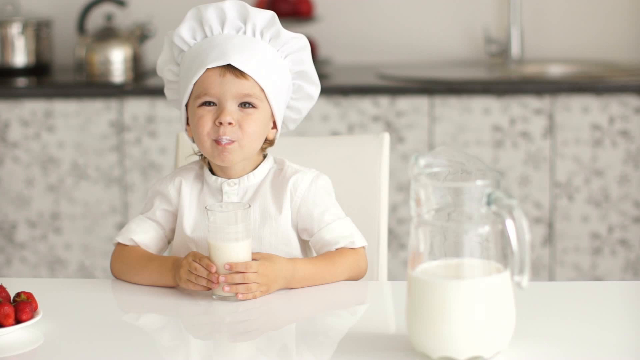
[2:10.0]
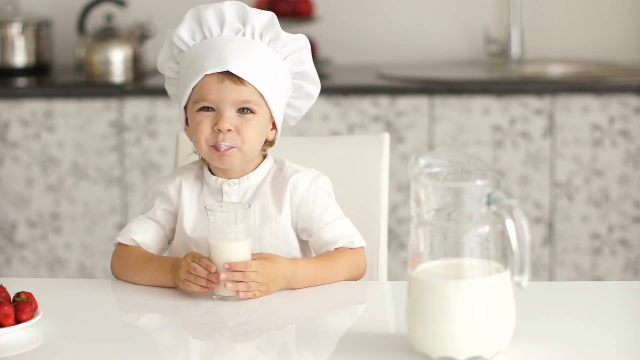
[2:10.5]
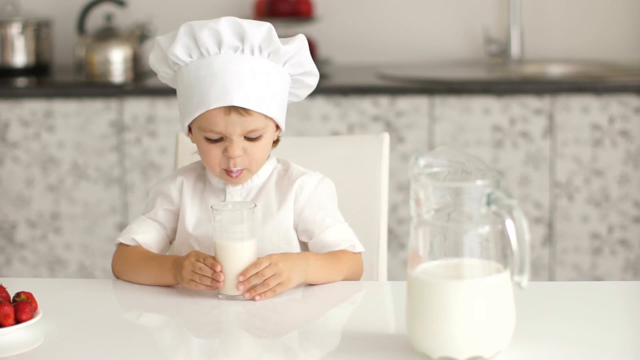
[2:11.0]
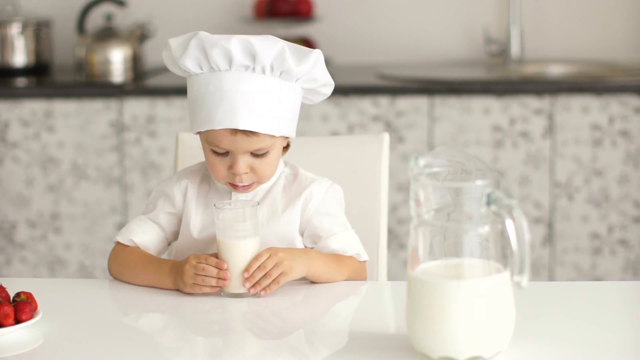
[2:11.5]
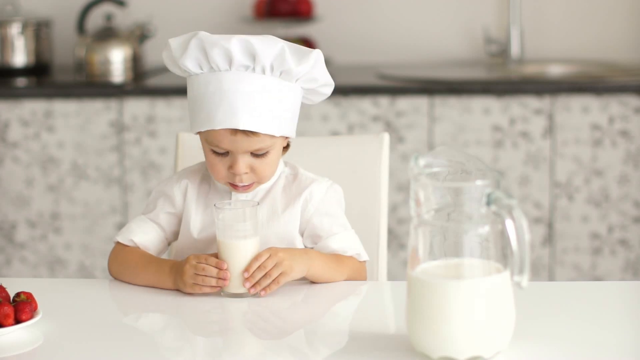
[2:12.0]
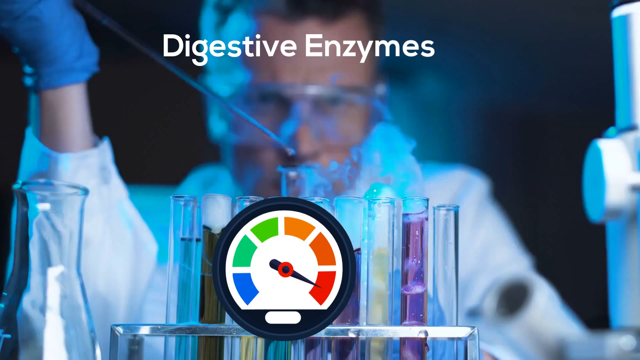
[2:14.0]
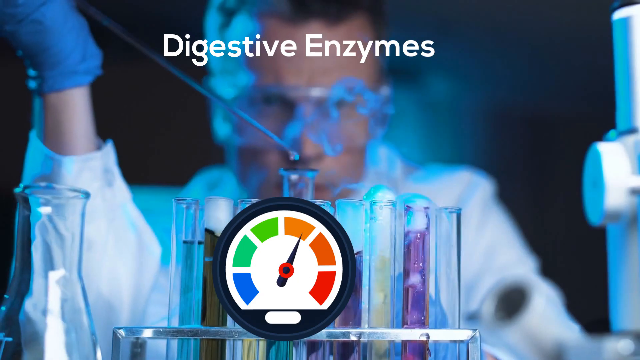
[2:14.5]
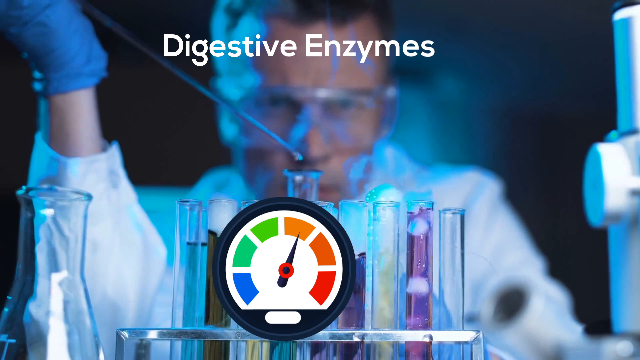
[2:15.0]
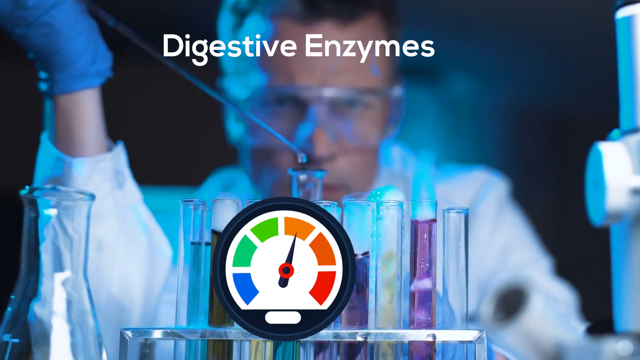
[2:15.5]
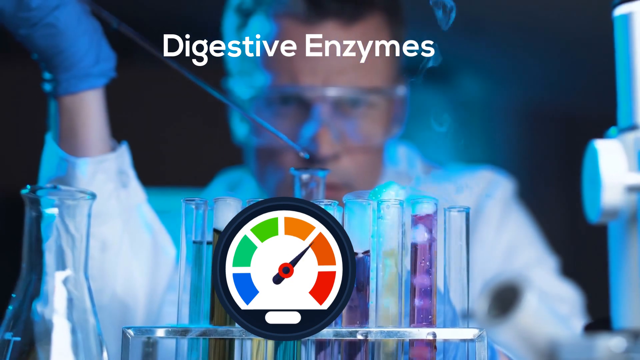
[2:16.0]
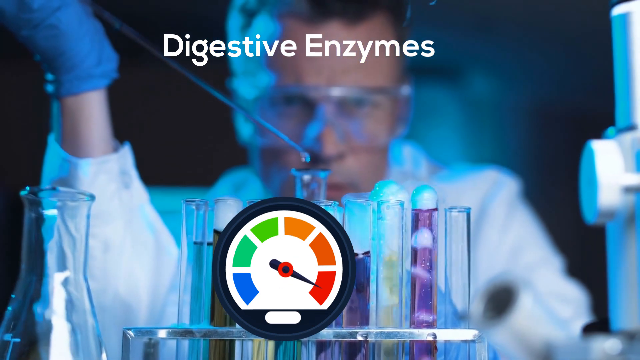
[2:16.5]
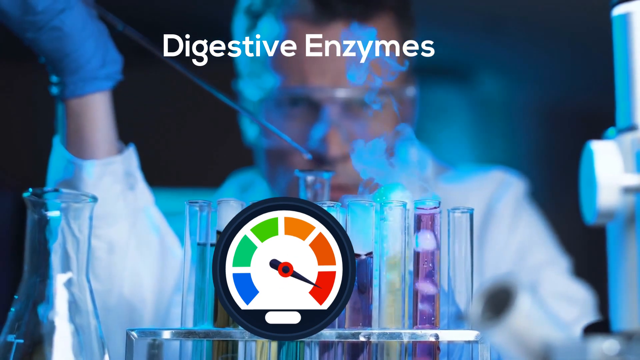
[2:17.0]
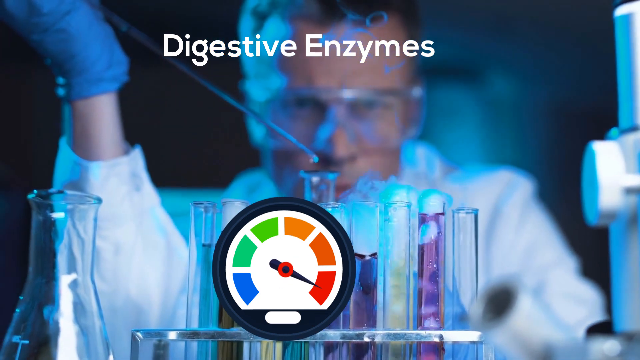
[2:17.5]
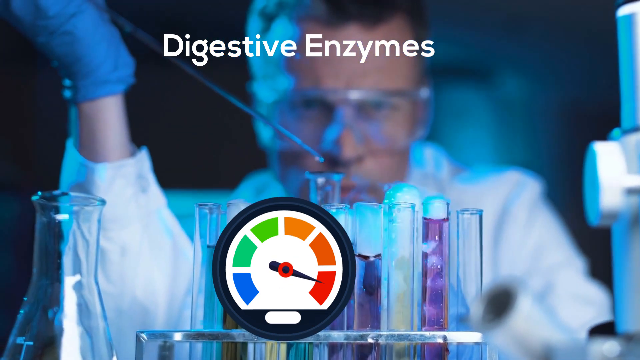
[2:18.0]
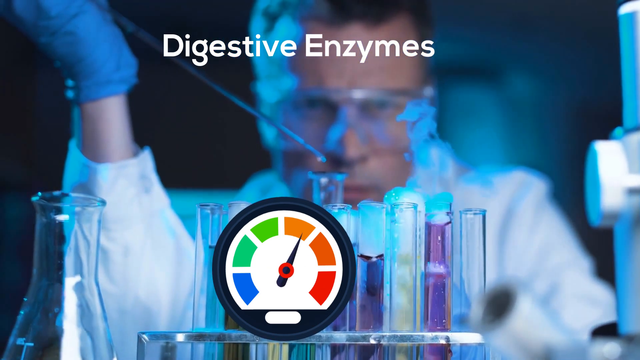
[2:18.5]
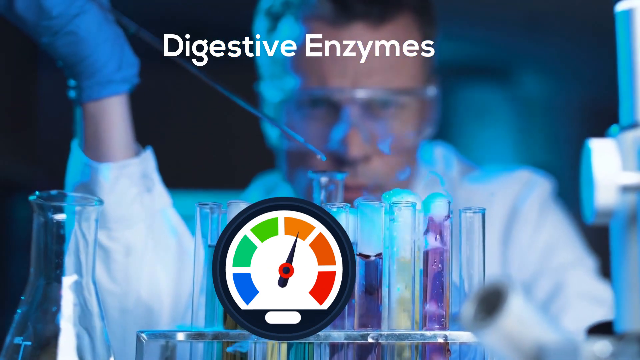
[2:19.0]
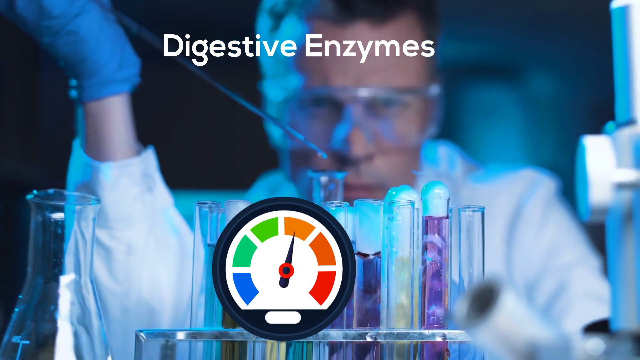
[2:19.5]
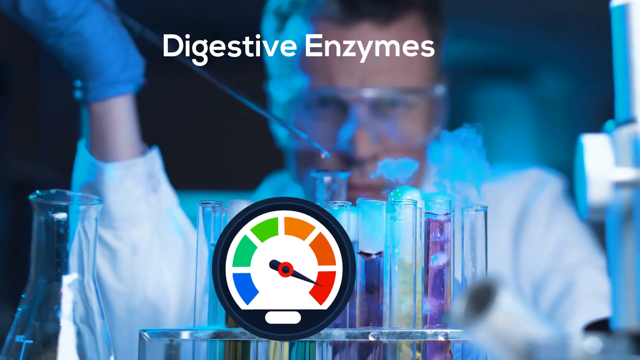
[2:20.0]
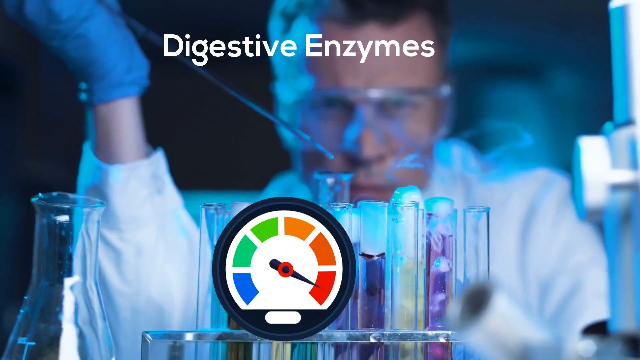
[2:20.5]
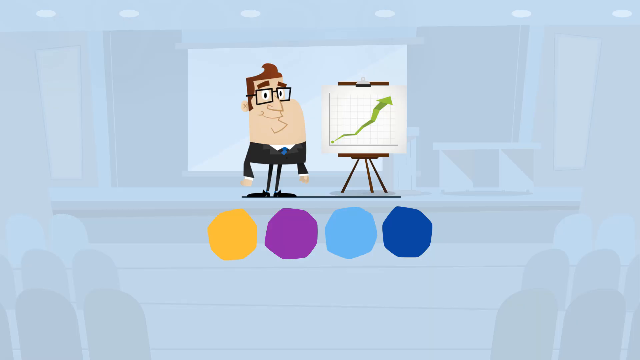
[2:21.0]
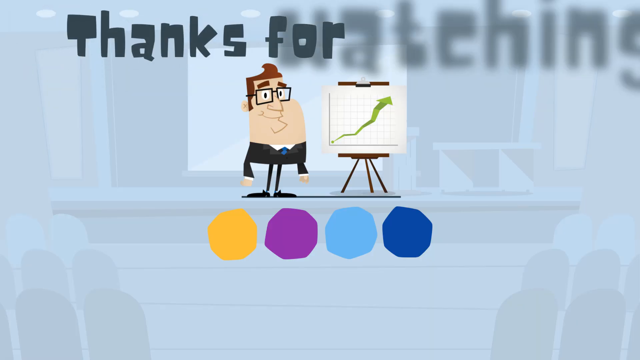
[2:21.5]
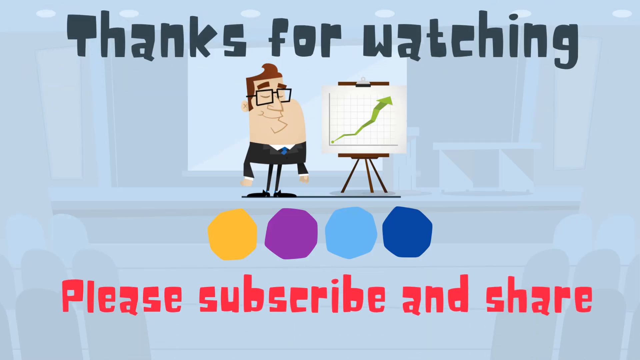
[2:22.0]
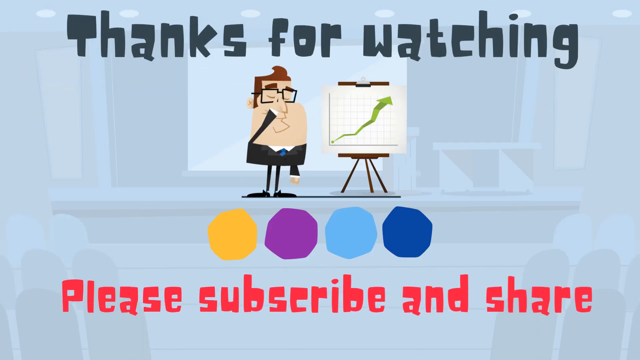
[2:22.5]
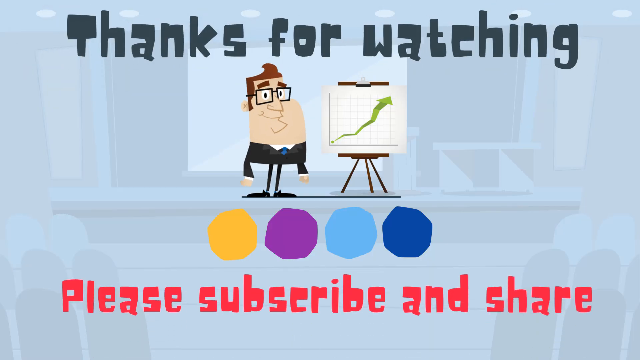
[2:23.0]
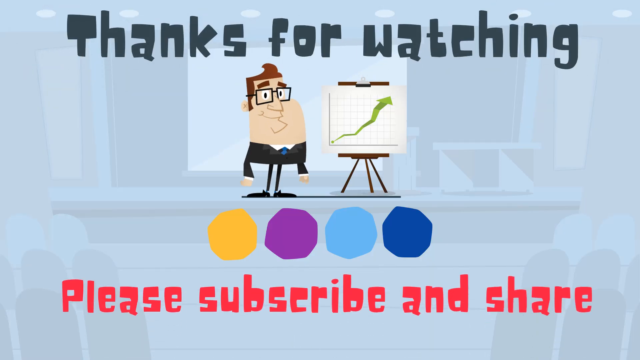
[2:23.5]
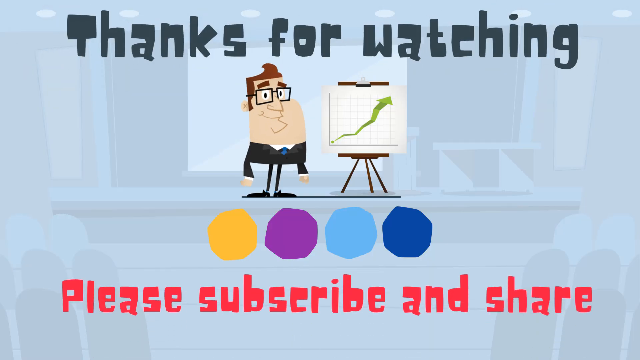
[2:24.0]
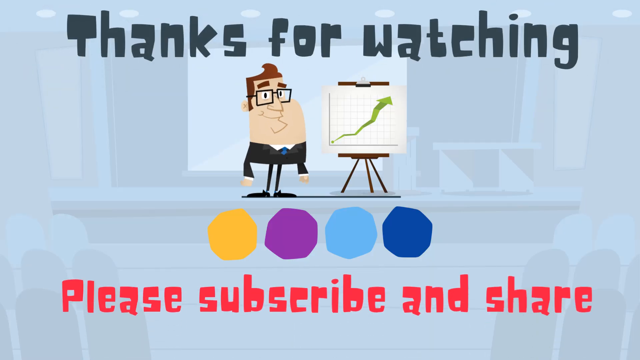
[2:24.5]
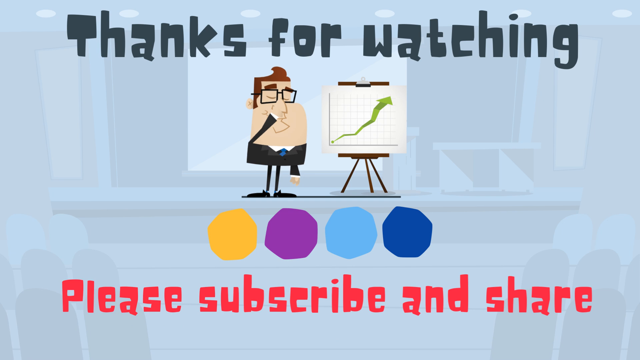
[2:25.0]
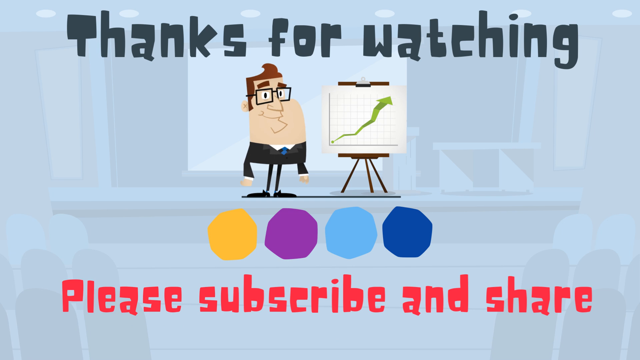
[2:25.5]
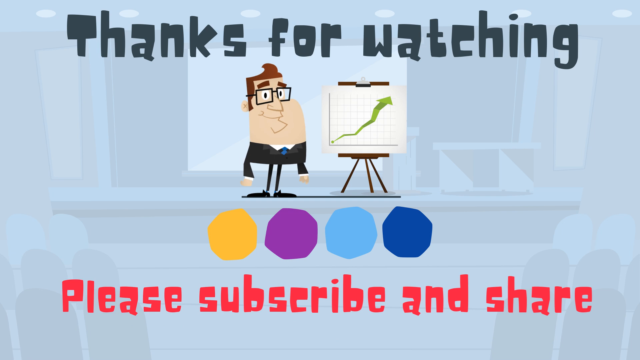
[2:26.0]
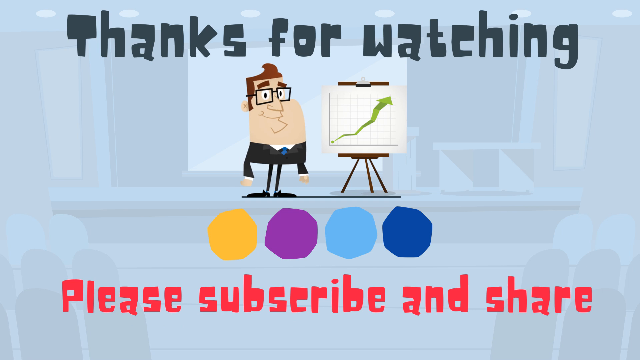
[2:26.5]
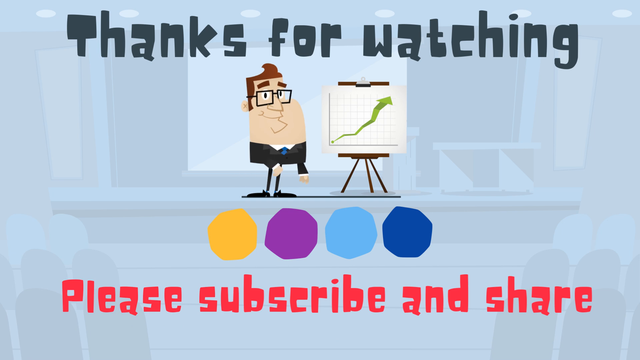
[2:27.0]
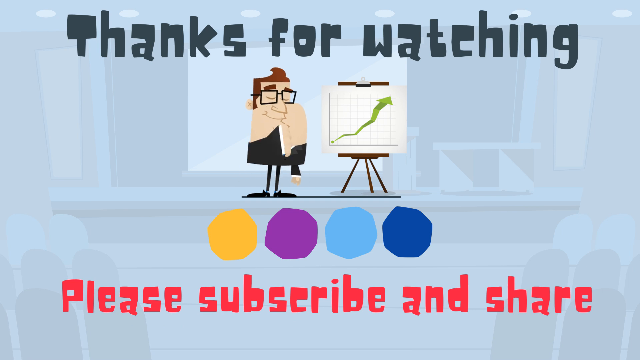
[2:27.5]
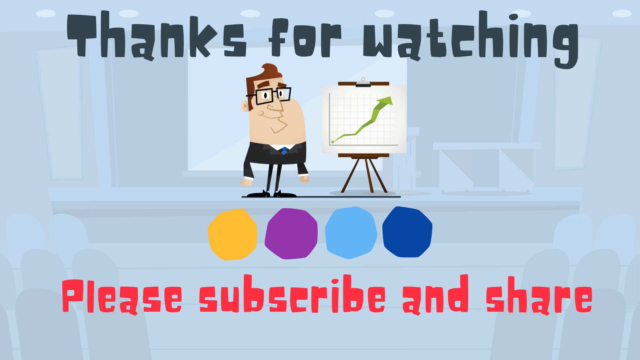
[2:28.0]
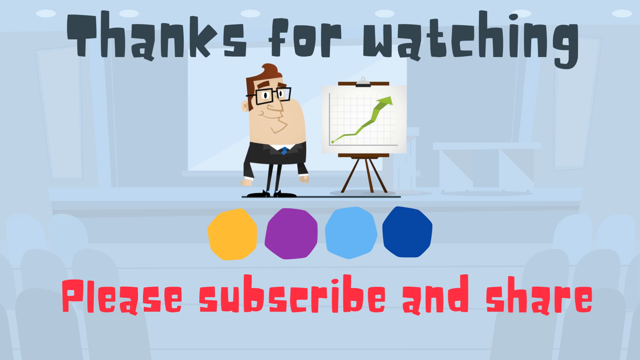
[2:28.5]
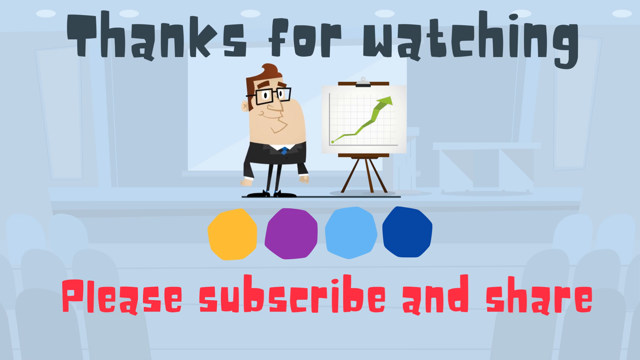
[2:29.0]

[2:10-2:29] A cartoon ending shows the girl and a cartoon figure that looks like a teacher, with a club and a blue towel. Four circles appear: a yellow circle, a pink circle, a blue circle and a light blue circle, along with a link for a subscription. There is a white plate, a big jug of milk and a glass. Cupboards in the background hold a pot, and there is a sink behind the child's back. She is sitting in a white chair and smiles after sipping milk.